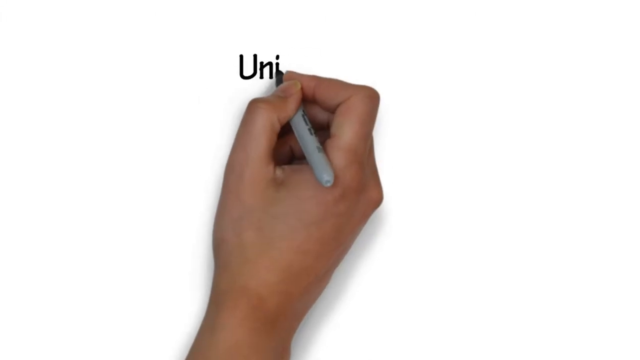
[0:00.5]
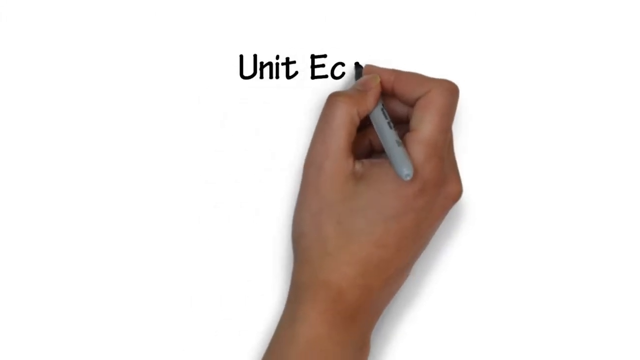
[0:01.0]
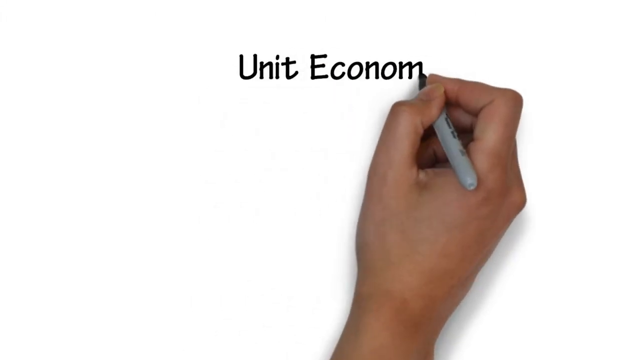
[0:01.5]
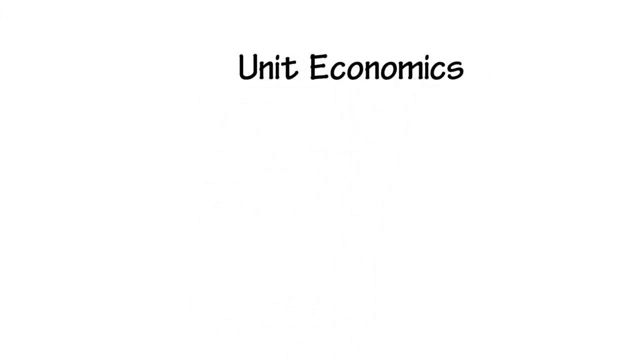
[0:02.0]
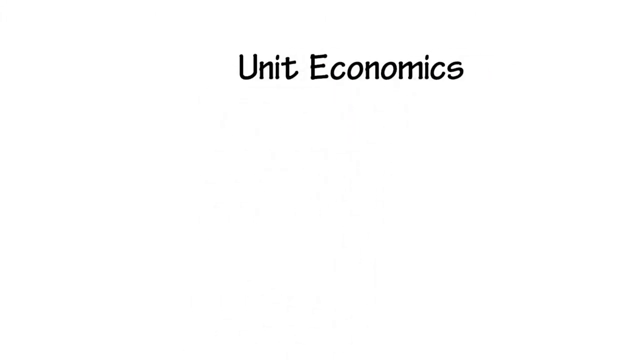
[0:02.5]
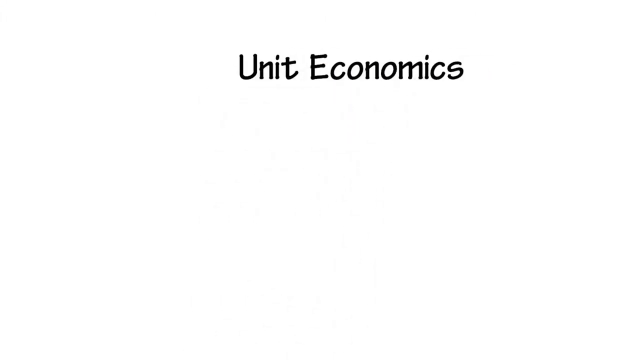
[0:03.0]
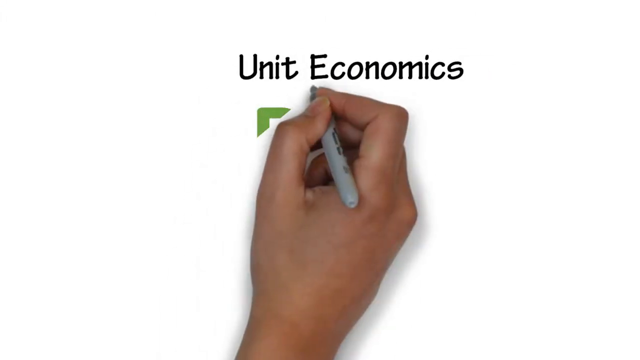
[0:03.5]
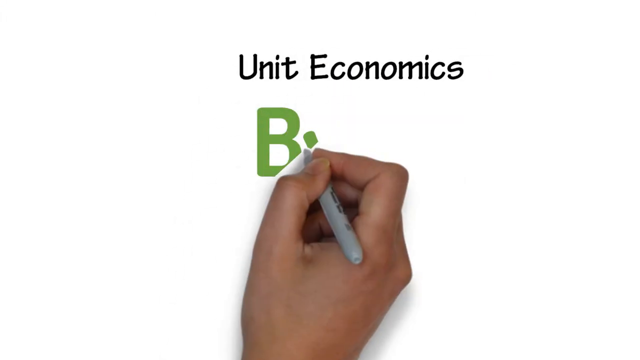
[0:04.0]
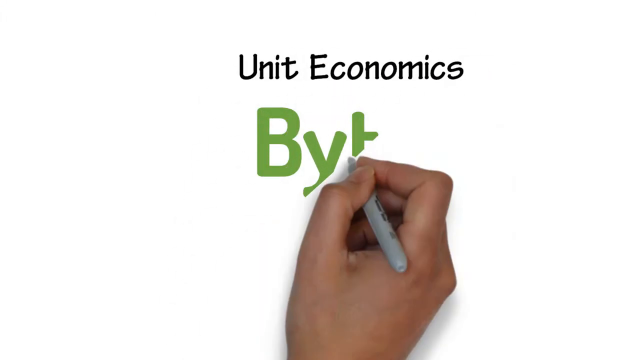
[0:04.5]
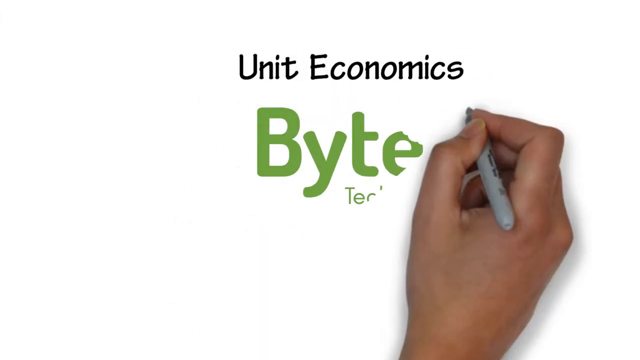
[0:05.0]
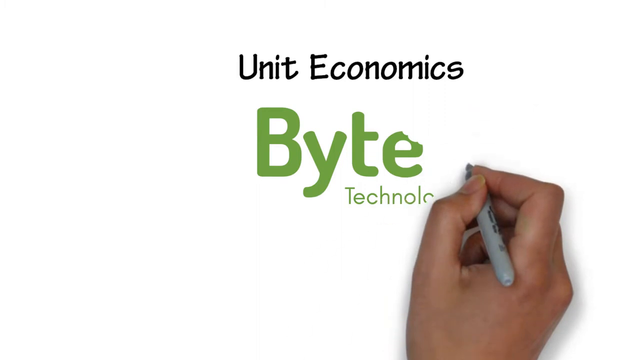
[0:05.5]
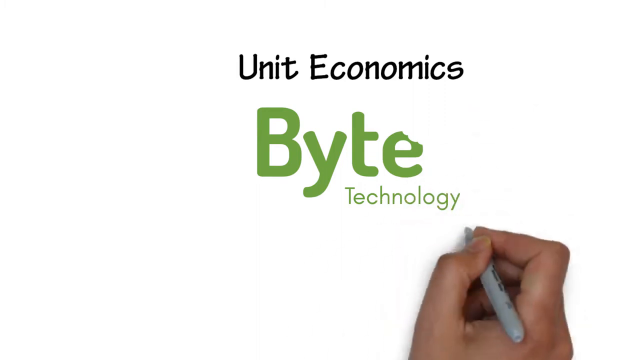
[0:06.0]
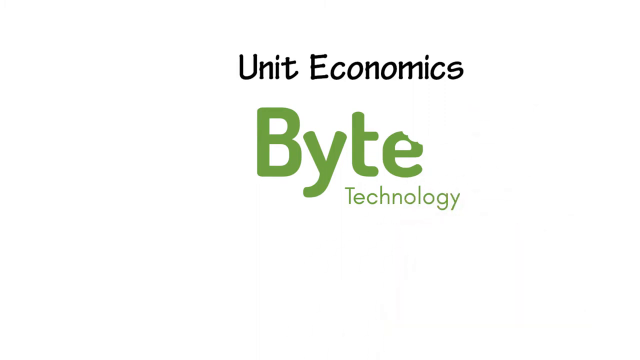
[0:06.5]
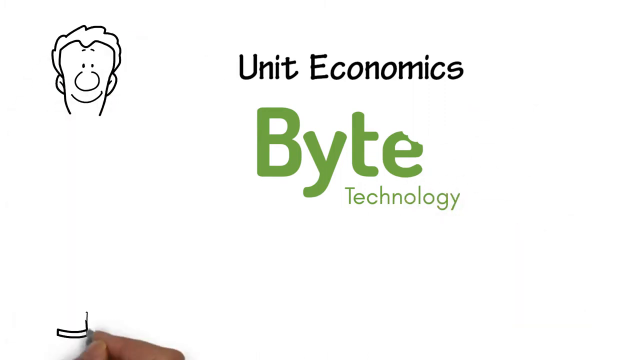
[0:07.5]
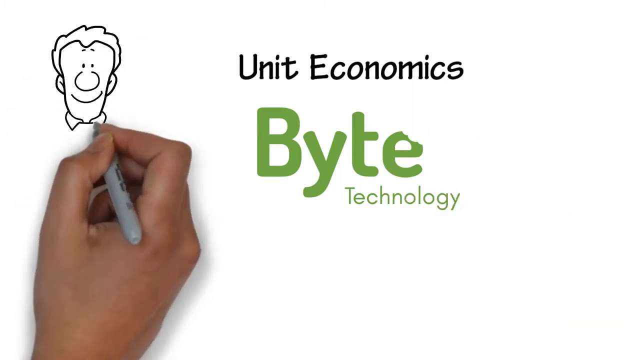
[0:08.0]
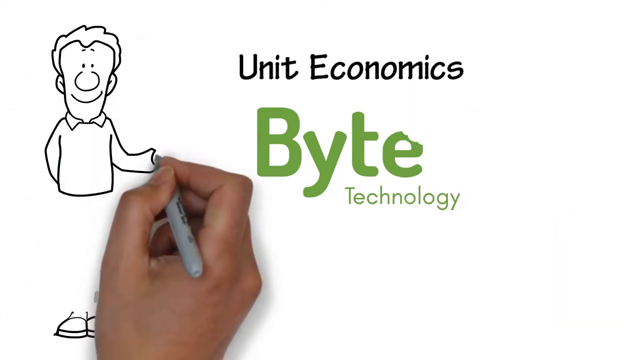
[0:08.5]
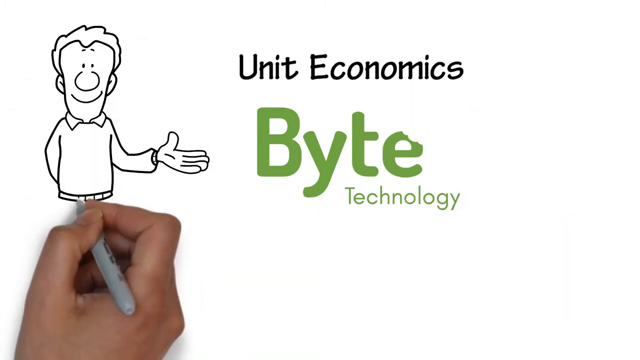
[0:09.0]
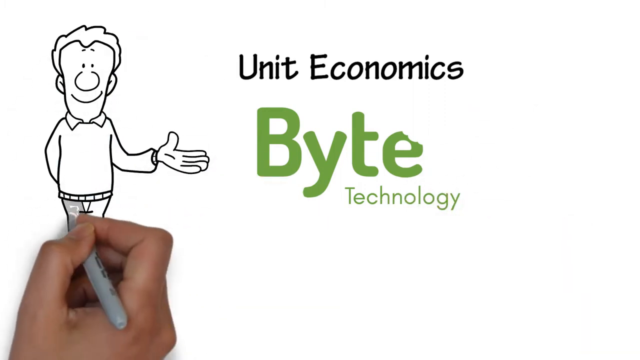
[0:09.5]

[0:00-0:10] The video opens on a blank screen with a white background. A person's hand appears holding a Sharpie permanent marker and writes the words "unit economics" in black ink at the top of the screen. The hand then moves the marker over the central part of the screen, and the Byte Technology logo, in green bold letters, starts getting drawn by itself. The same hand moves to the left part of the screen and draws a man wearing pants, a vest and a shirt. It colors the pants light gray and colors the man's sweater blue.